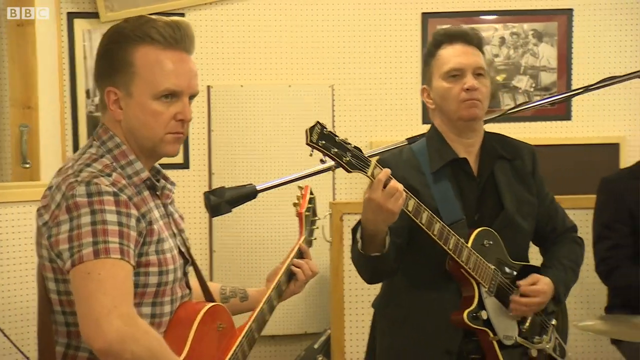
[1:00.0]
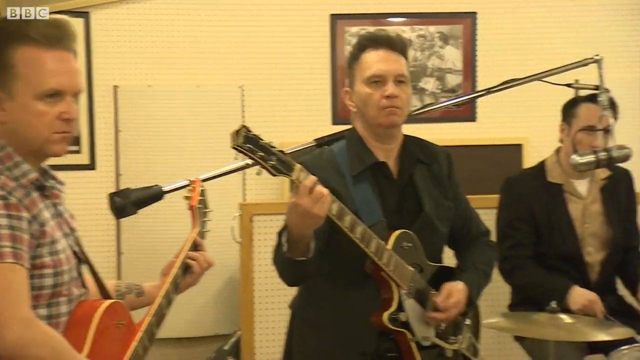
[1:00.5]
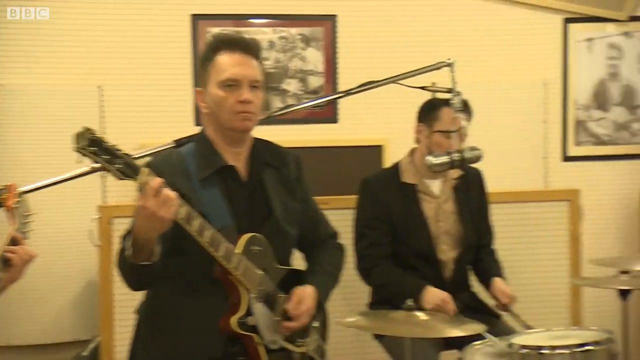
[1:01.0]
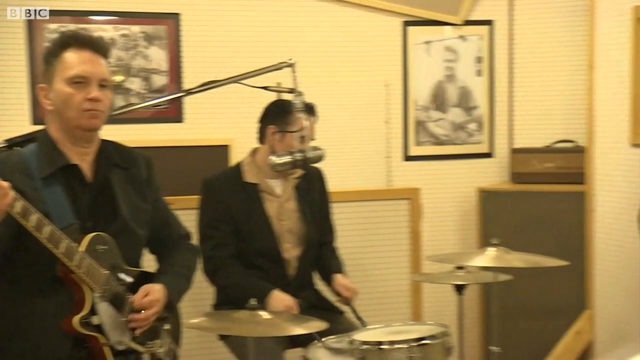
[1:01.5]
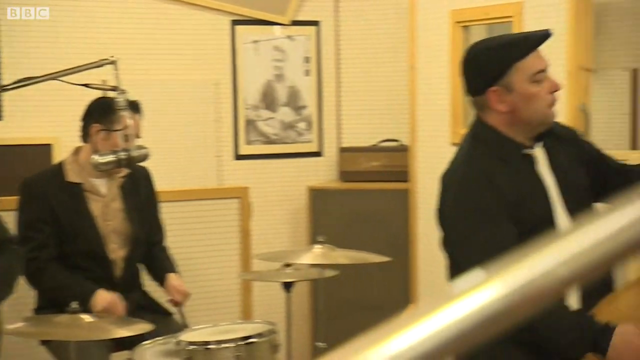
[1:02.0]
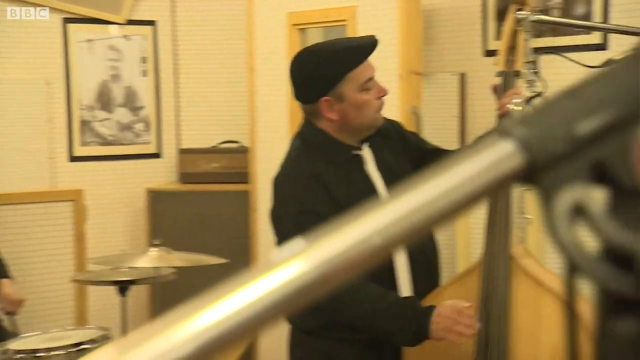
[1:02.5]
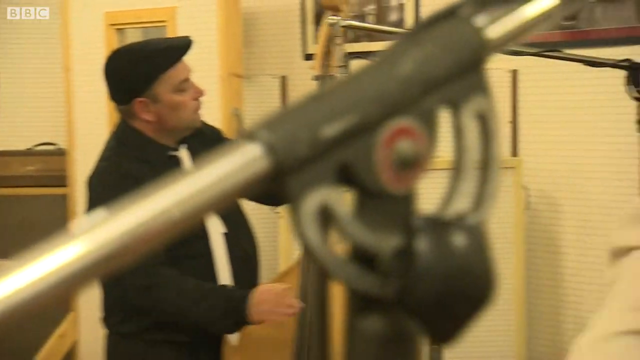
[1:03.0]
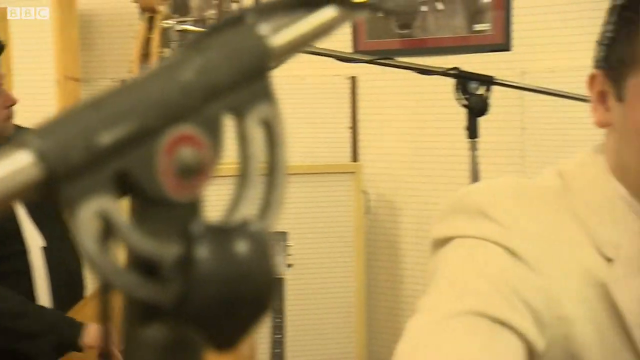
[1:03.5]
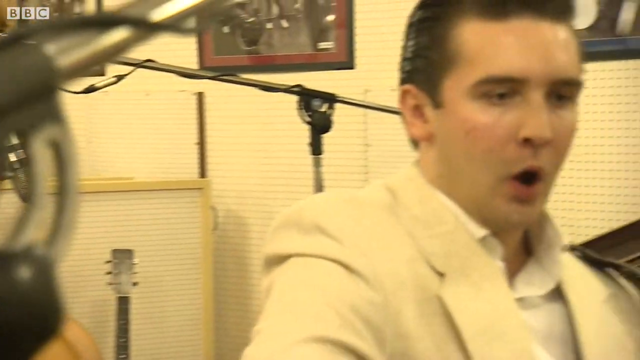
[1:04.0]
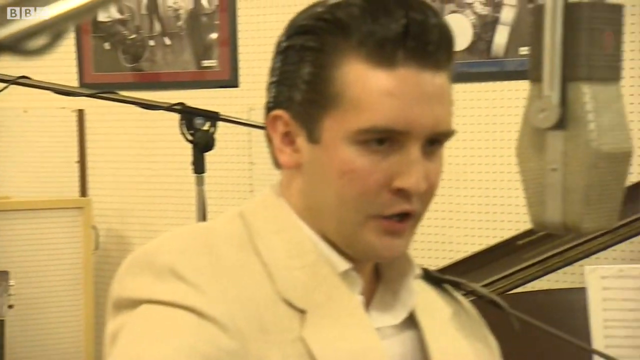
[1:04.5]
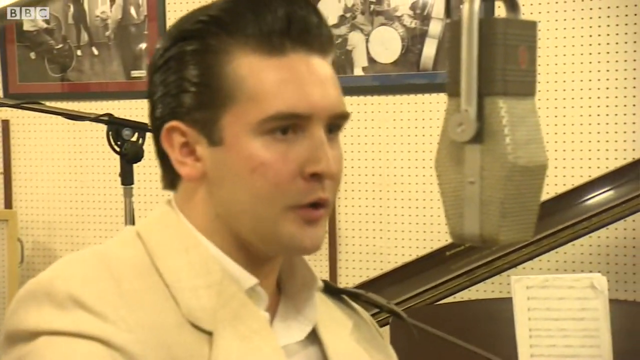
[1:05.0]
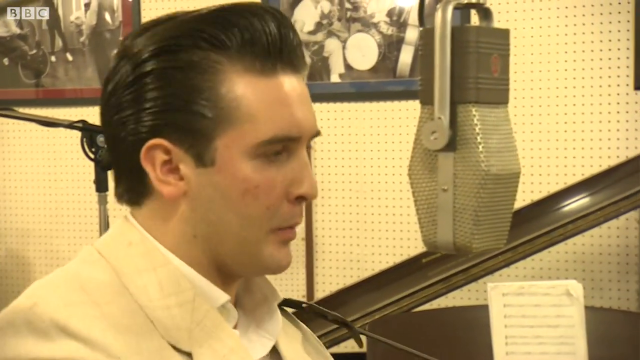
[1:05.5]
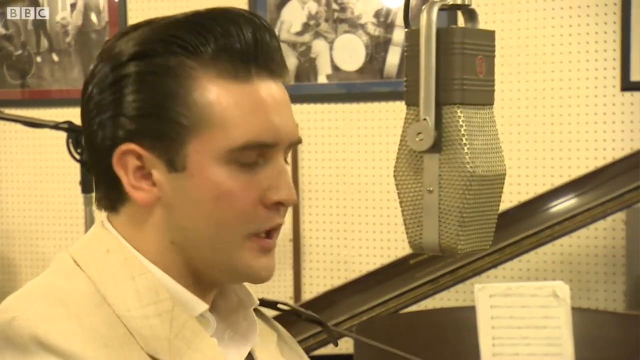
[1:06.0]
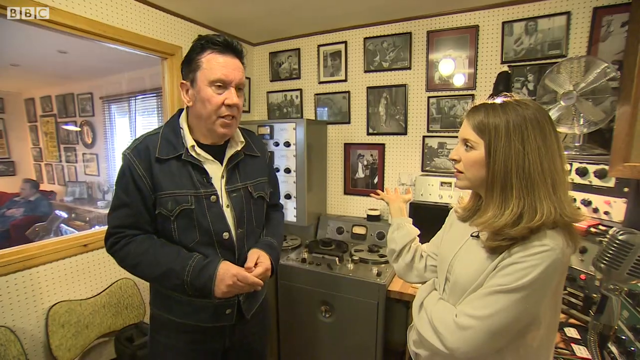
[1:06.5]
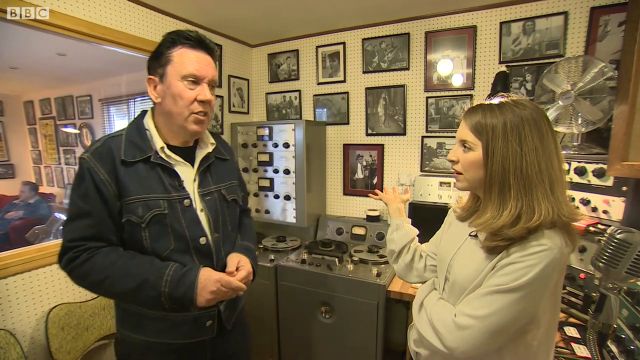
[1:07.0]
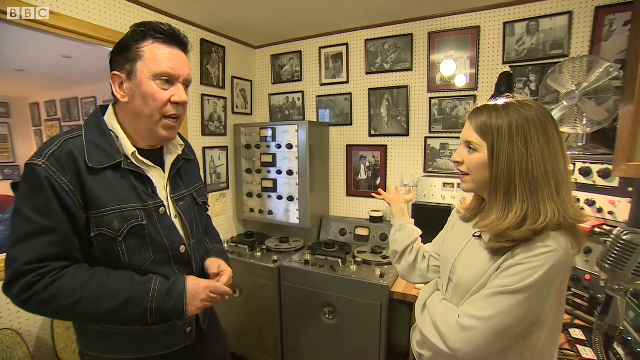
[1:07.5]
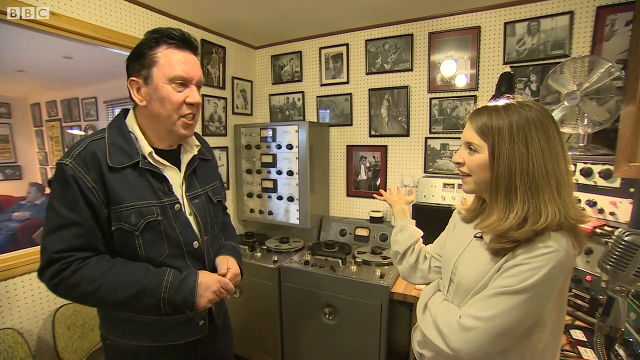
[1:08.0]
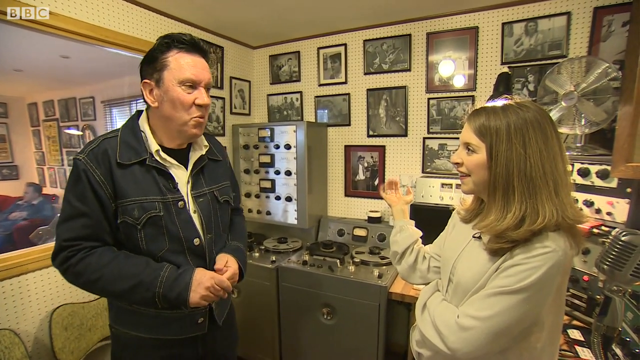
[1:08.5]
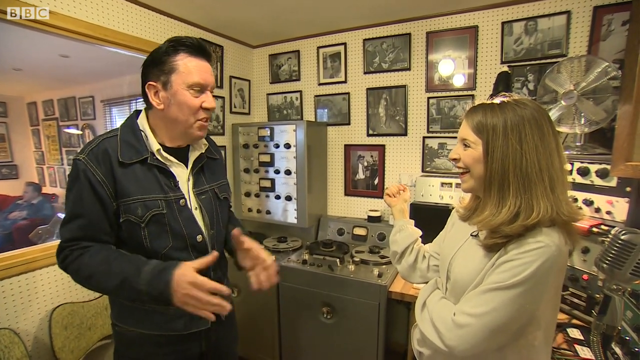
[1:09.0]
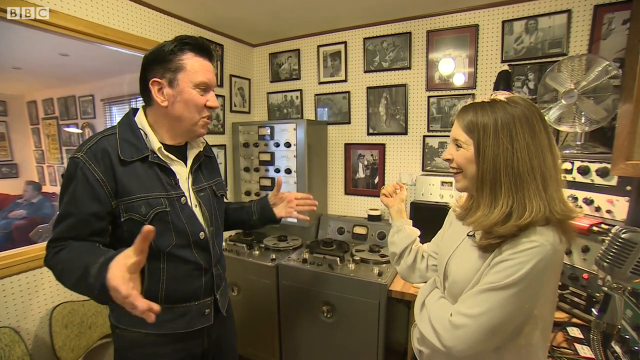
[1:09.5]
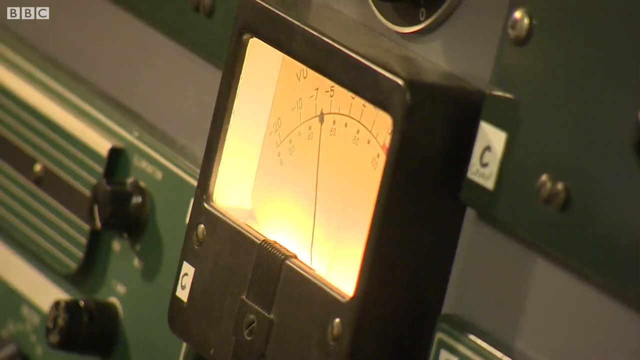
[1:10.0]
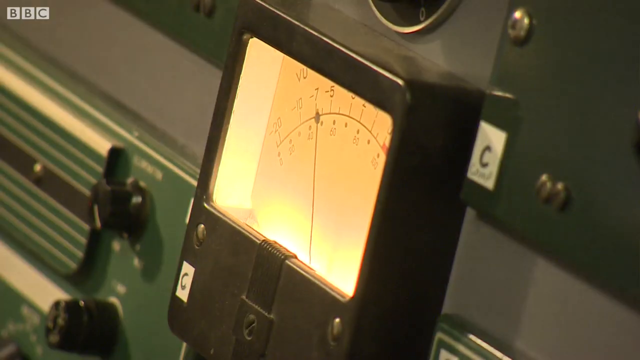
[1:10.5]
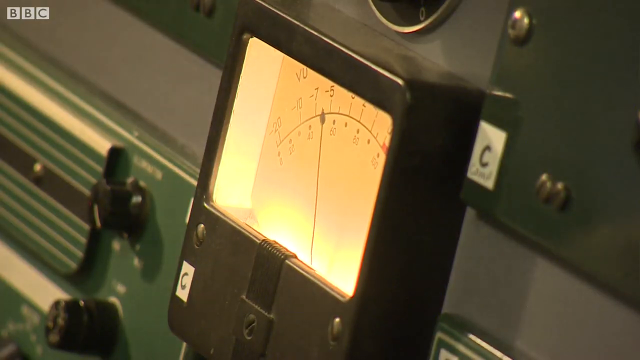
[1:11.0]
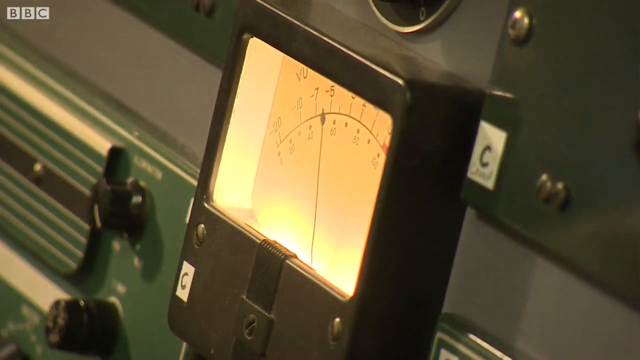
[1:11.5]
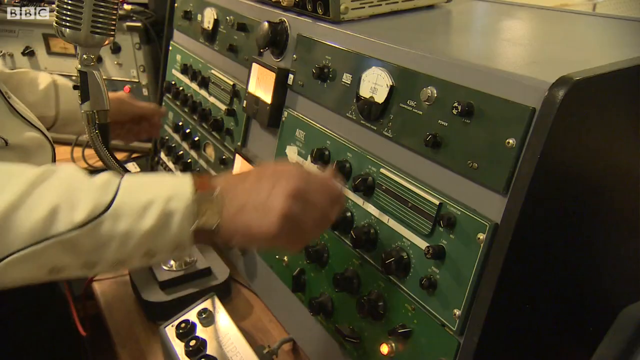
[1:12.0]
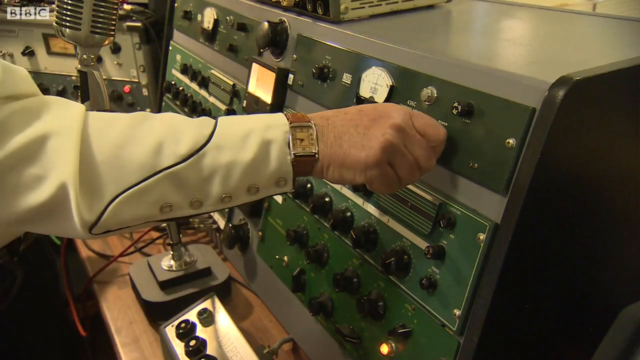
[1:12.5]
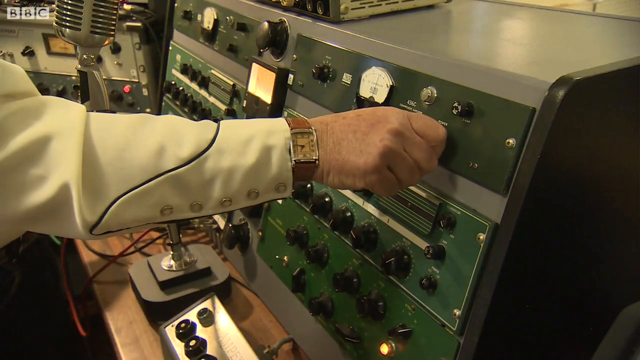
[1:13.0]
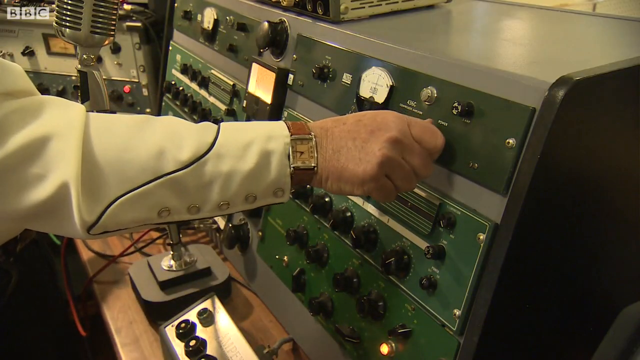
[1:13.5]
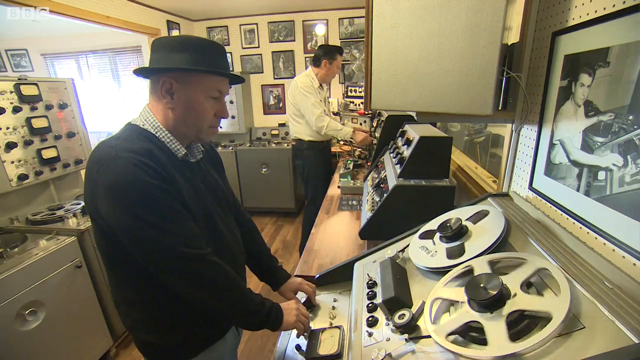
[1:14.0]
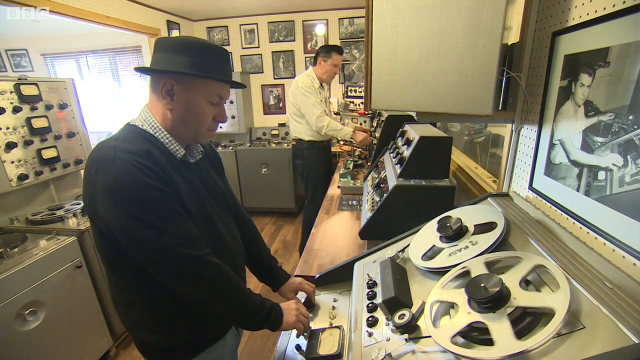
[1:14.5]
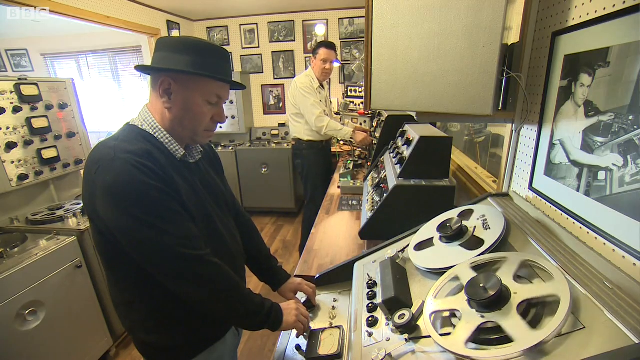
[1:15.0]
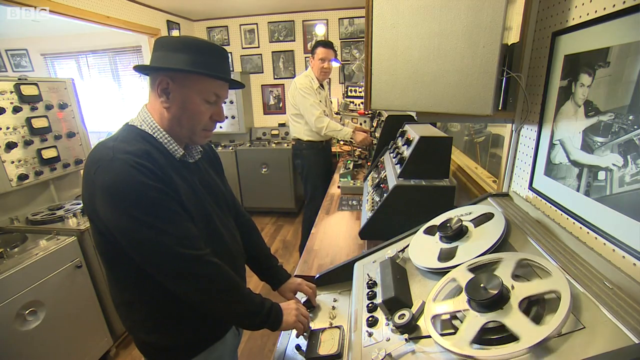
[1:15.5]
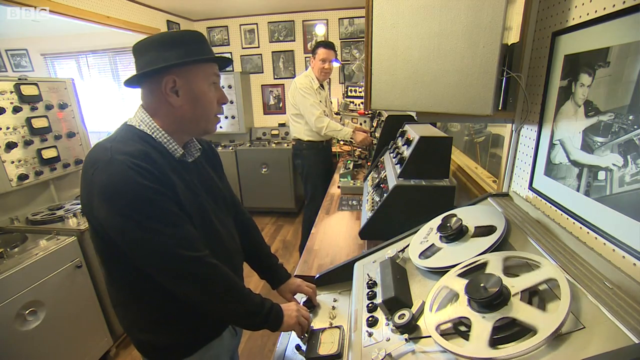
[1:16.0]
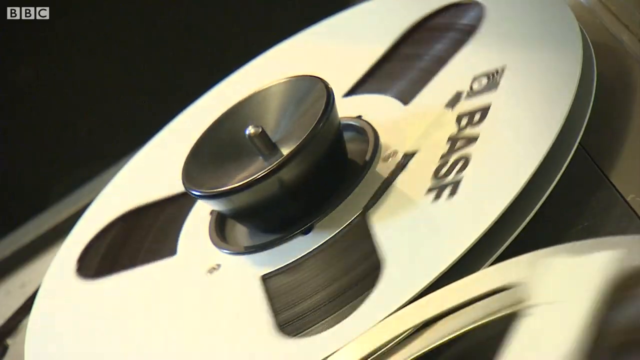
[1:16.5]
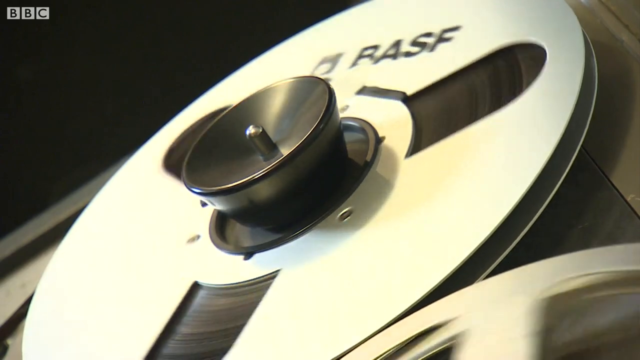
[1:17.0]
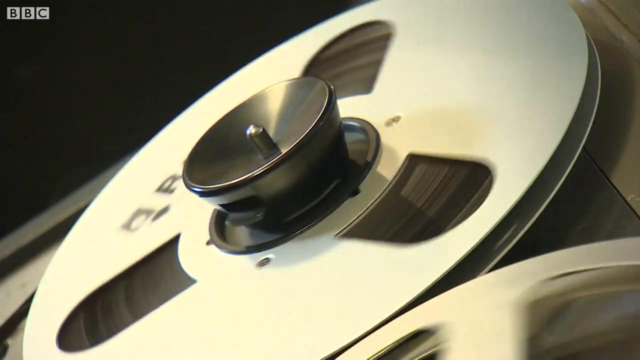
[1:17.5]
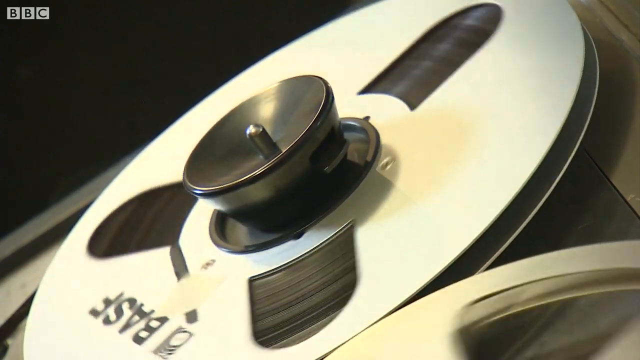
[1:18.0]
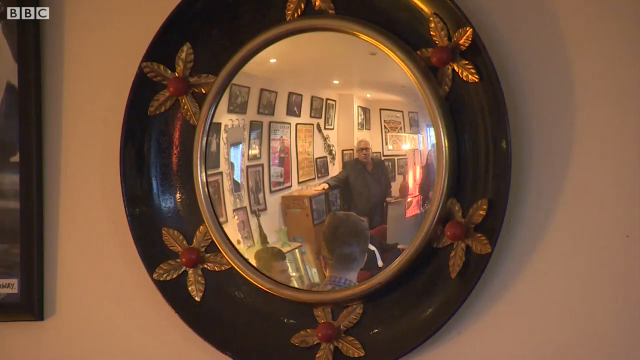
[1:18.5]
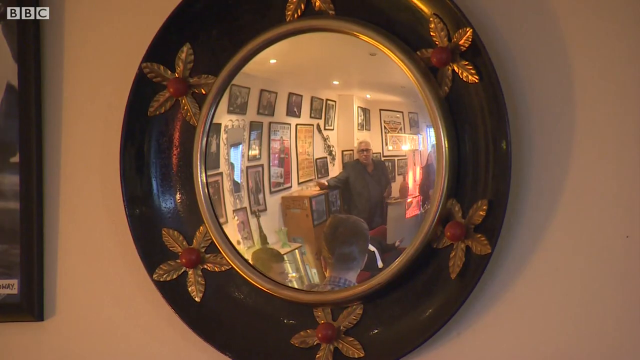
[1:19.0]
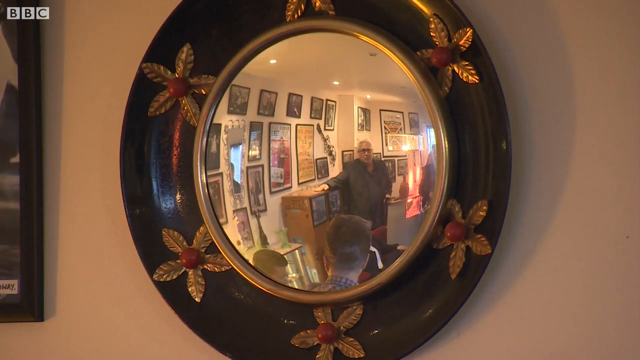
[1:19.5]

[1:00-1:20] Musicians play guitars in a music studio. As the camera pans right, the rest of the band is visible playing. They are dressed as if they are maybe 1950s musicians, playing electric guitars, stand-up bass, drums and other instruments. The recording room attached to the studio is shown with its equipment. At one point a man stands inside the recording room talking, his hands out to each side as if using them to express his words. Shots of vintage-looking electronic recording equipment follow, and at one point a large reel-to-reel player appears with its wheels spinning as the tape runs through the recording head, probably recording the band.